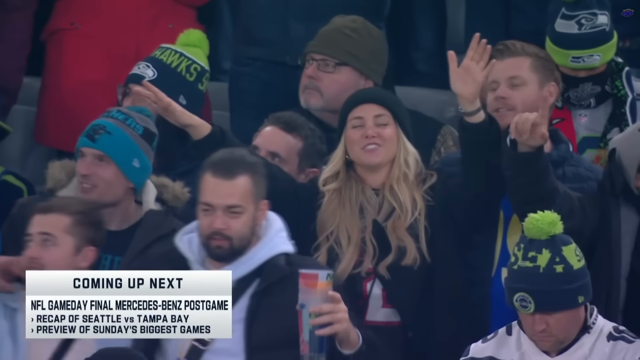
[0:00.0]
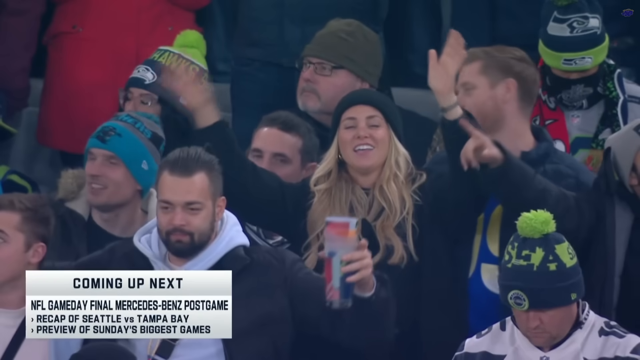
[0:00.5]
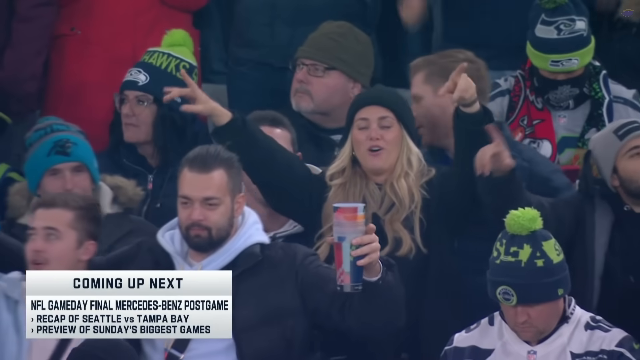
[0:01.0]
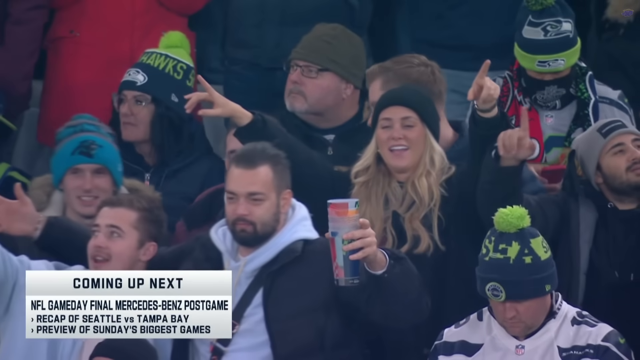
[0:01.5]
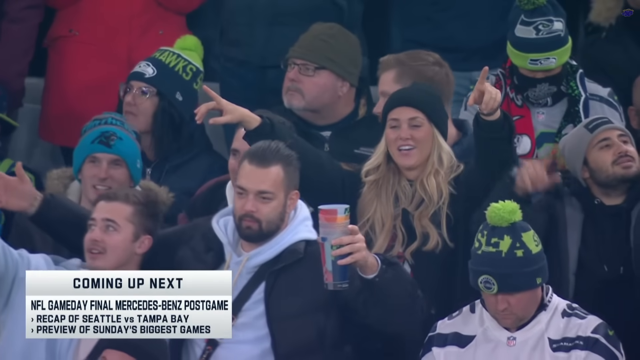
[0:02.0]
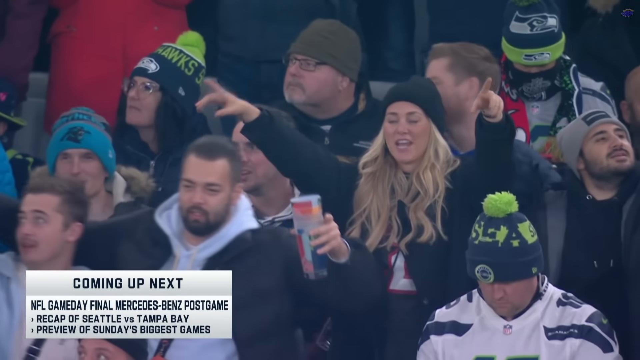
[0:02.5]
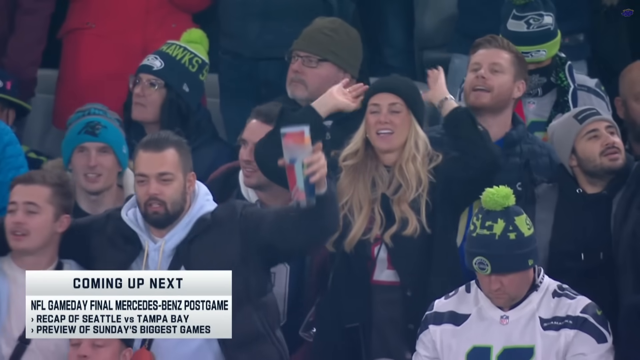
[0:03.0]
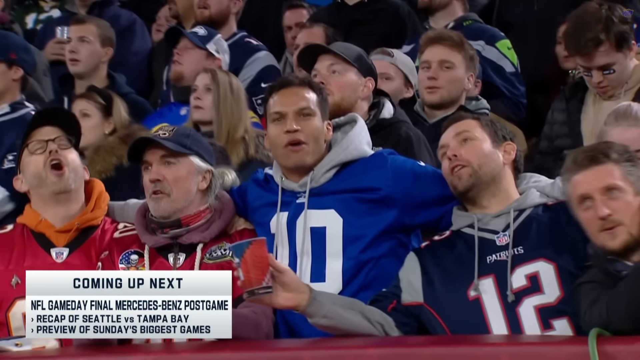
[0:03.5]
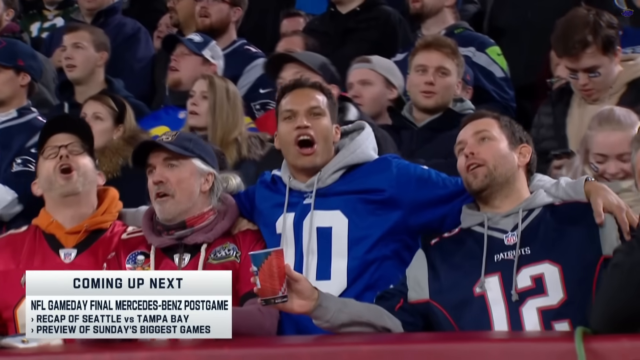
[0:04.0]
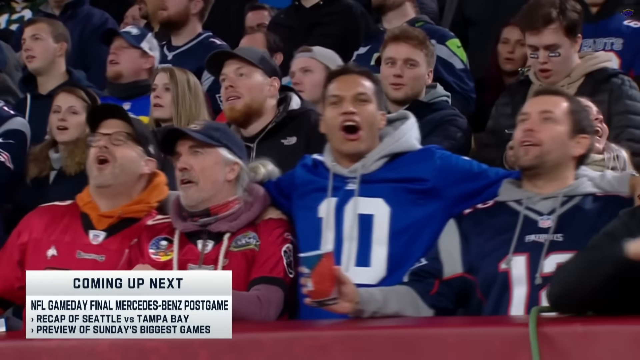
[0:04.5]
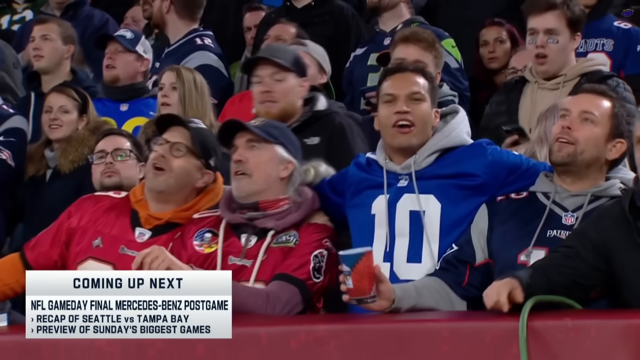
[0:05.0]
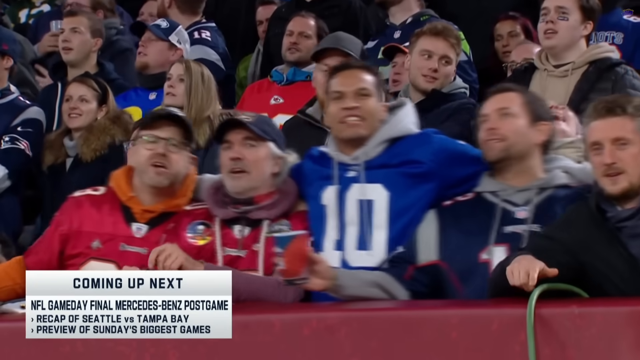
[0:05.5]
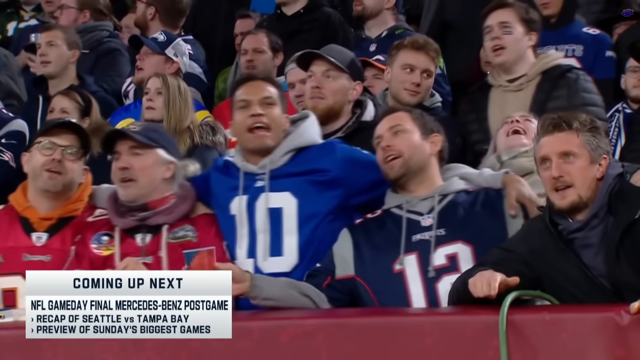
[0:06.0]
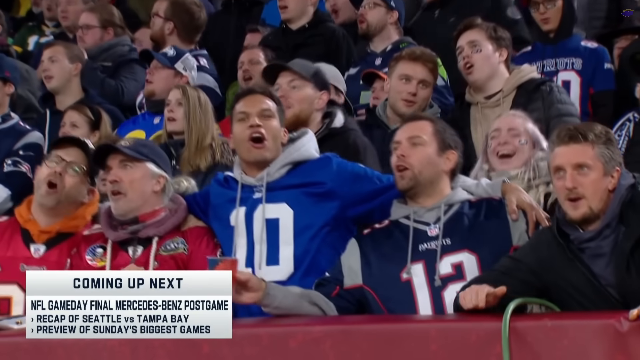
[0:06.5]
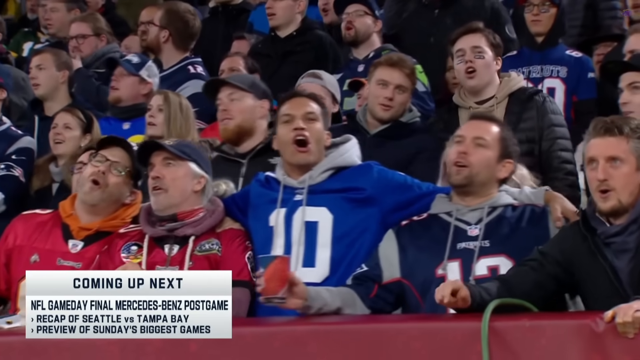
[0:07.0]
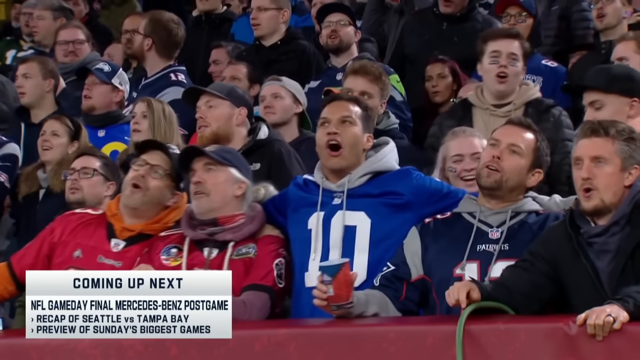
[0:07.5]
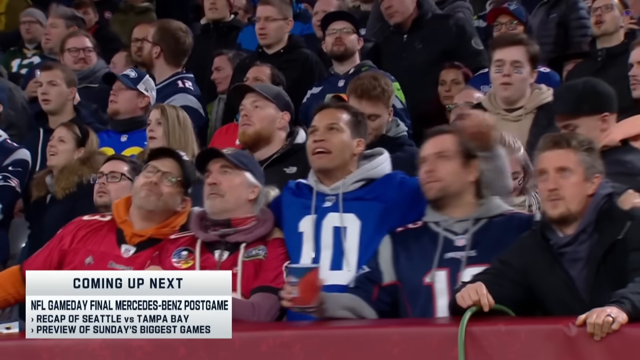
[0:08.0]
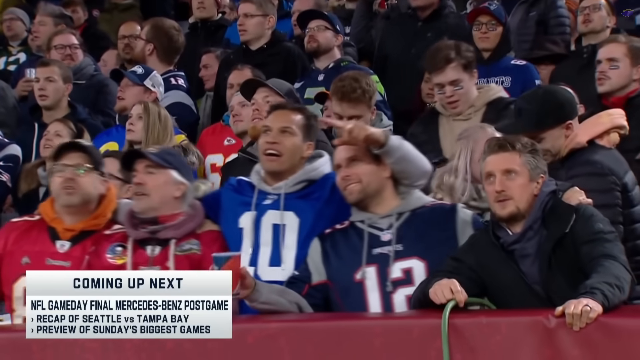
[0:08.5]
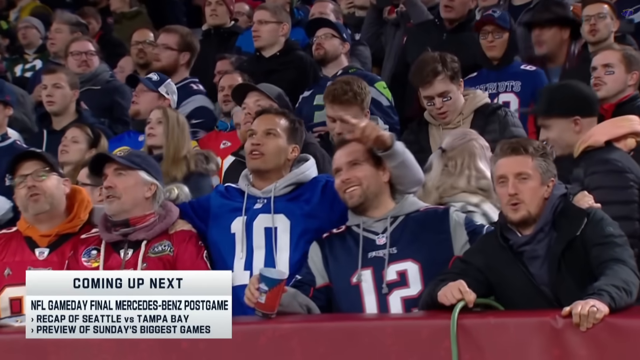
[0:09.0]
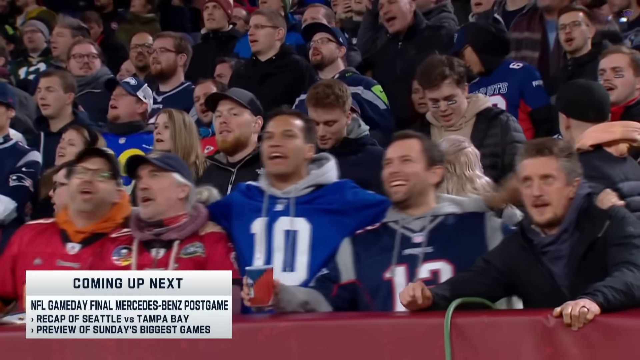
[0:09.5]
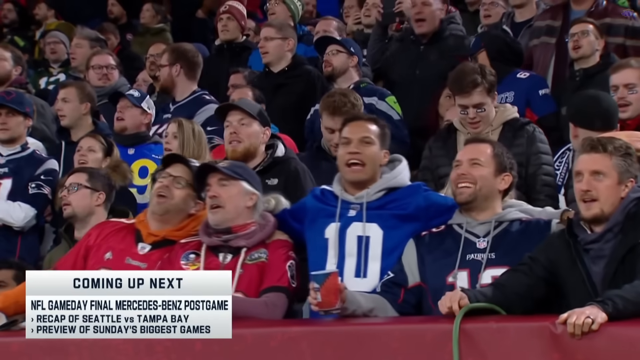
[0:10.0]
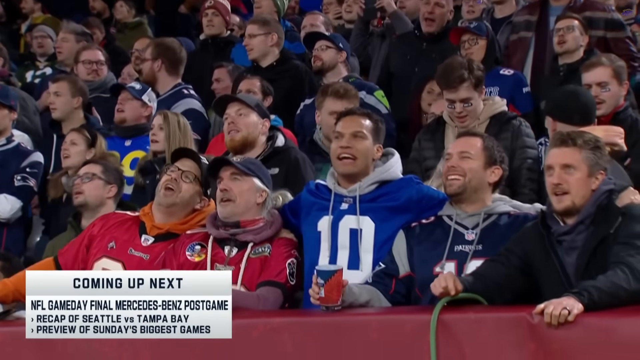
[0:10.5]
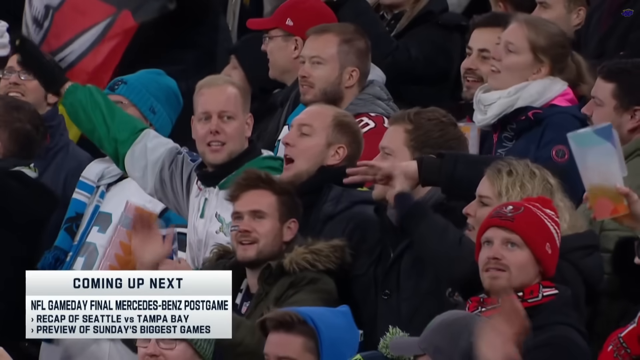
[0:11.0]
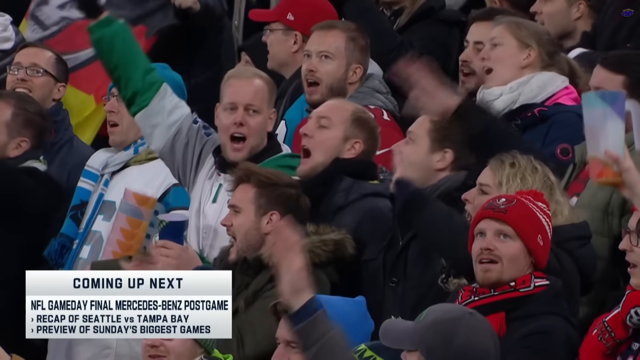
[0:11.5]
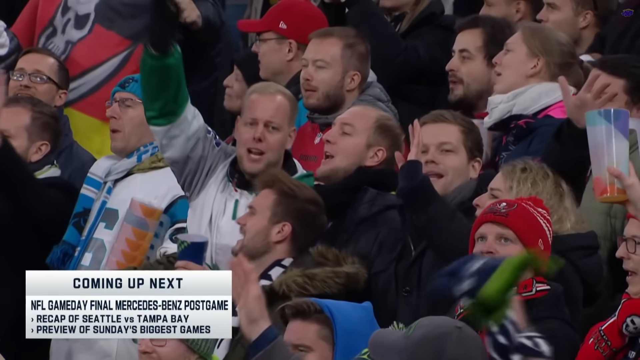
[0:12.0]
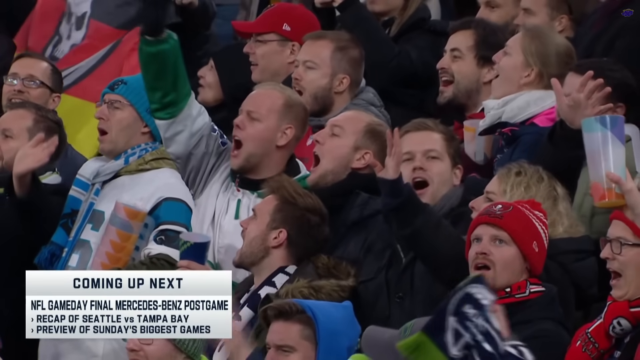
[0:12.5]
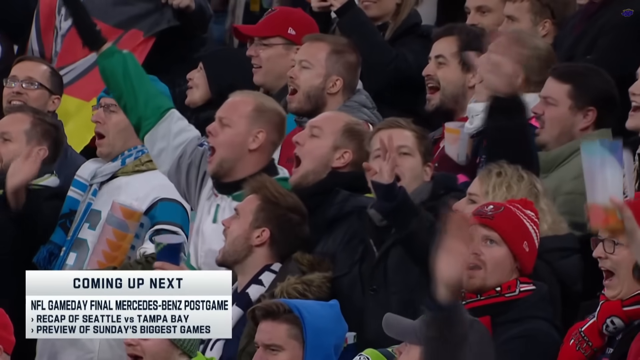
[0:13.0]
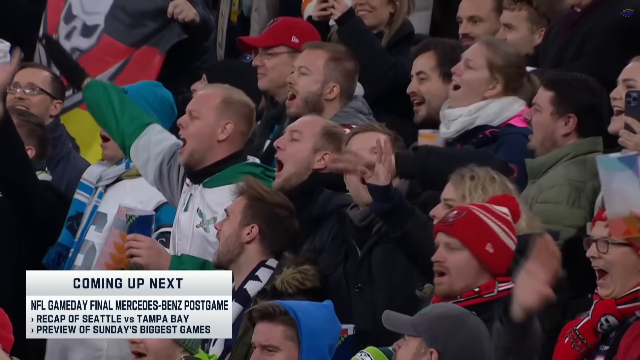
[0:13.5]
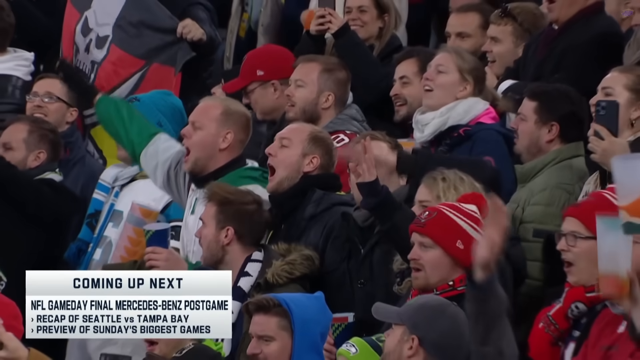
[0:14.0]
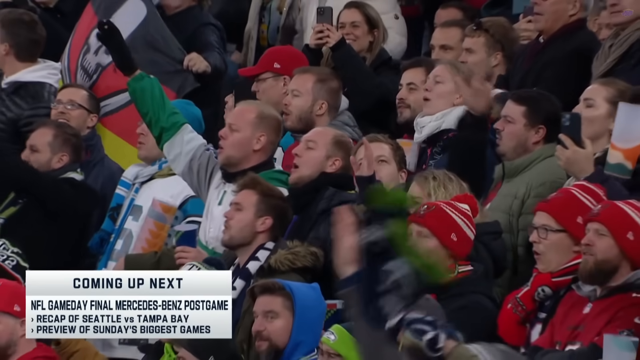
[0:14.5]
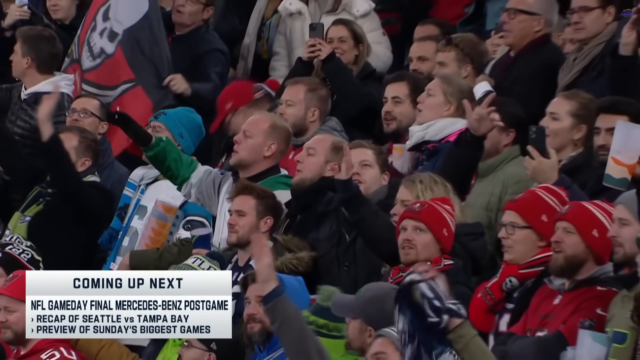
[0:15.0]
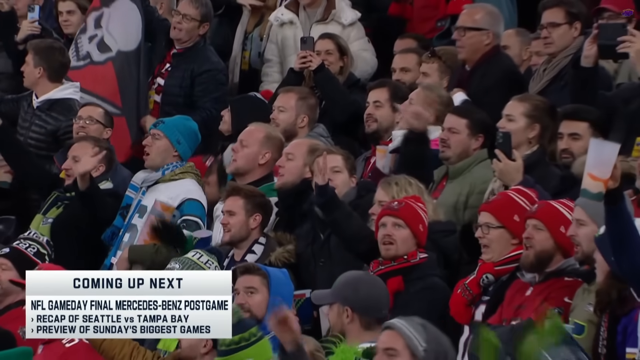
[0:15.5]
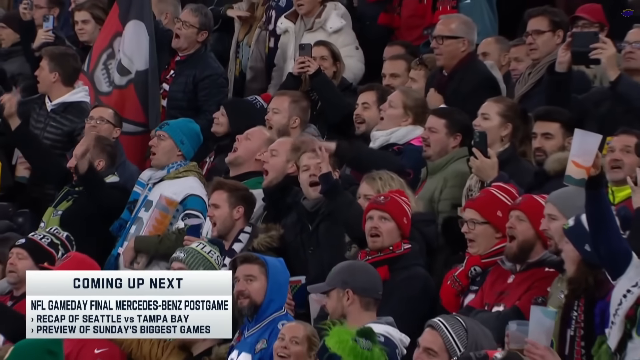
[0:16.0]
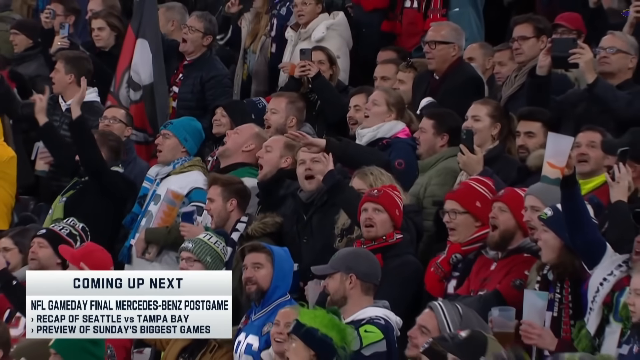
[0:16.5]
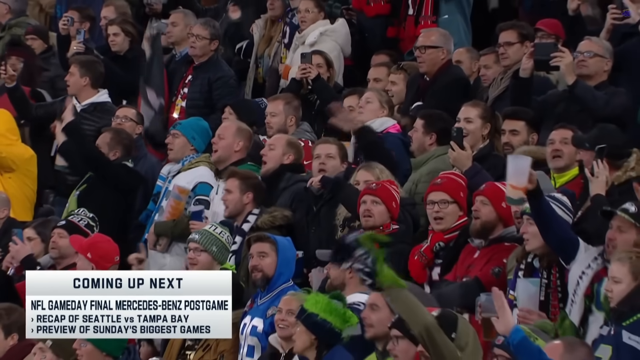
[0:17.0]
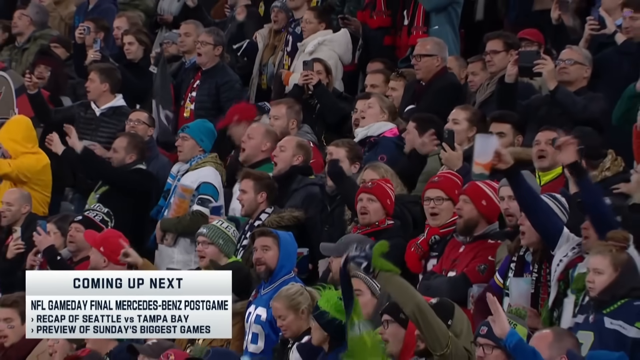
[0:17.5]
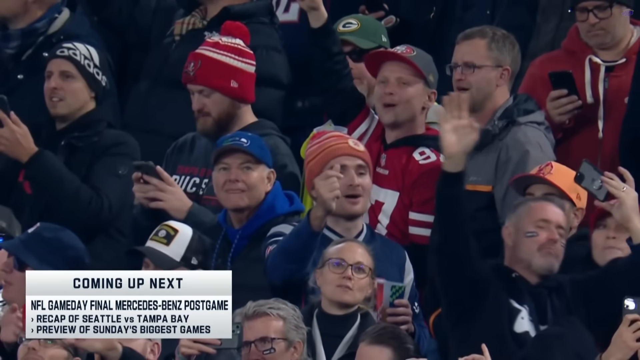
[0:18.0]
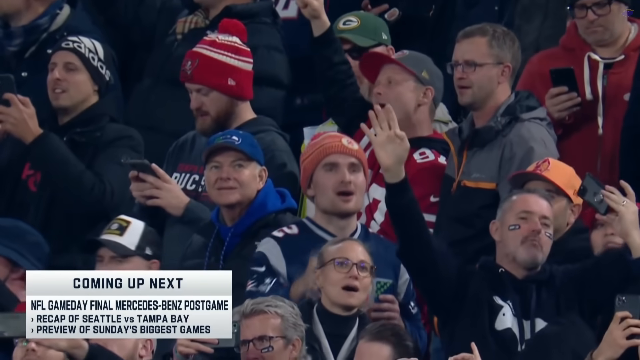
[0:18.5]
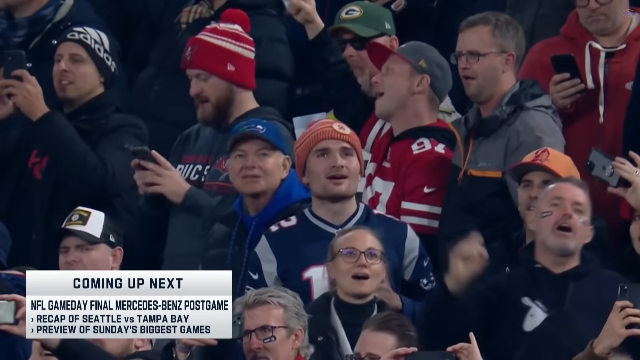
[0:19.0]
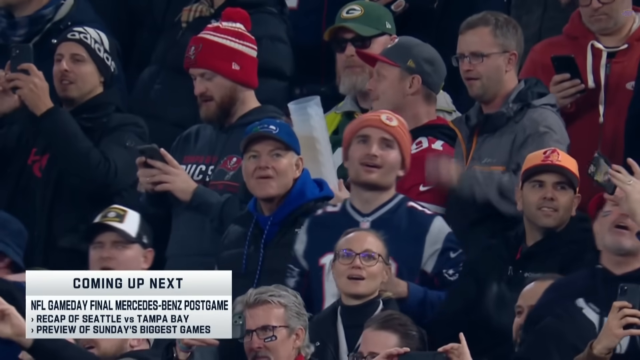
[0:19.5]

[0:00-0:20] Football fans fill a stadium that looks to be a Tampa Bay stadium in Florida. On the field, the Tampa Bay Buccaneers play against the Seattle Seahawks, while coaches and other players wait for their turn on the sidelines. In the audience, a woman with long blonde hair sings with her hands up. Other people in the front rows sing with their arms around each other, waving their hands back and forth. The crowd wears red and black Tampa Bay colors, and one close-up shows a boy wearing a blue and gray New England Patriots jersey. A banner at the bottom of the screen reads "NFL Network Seattle 16 TB 21".